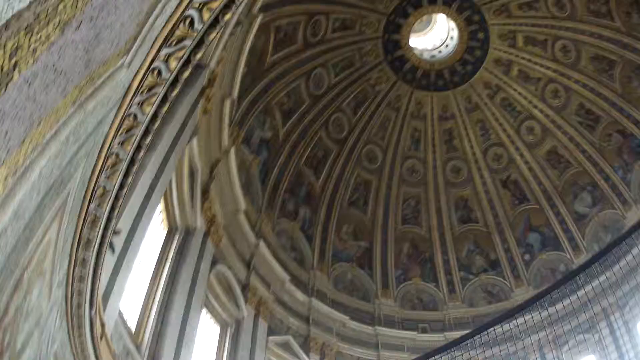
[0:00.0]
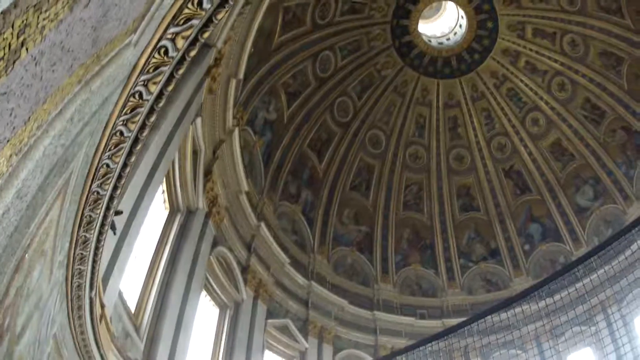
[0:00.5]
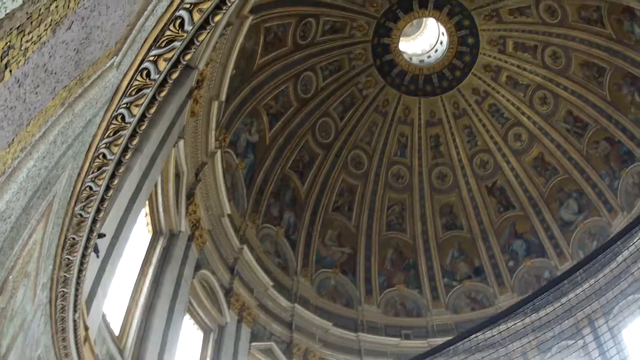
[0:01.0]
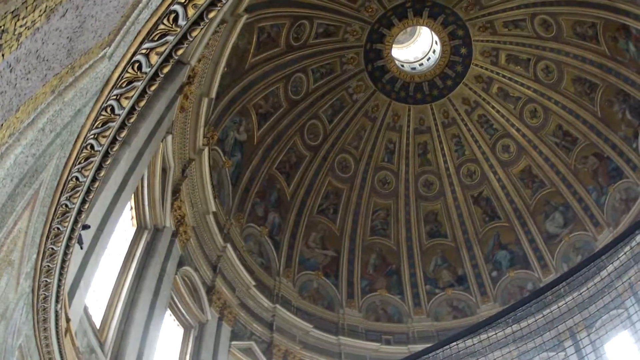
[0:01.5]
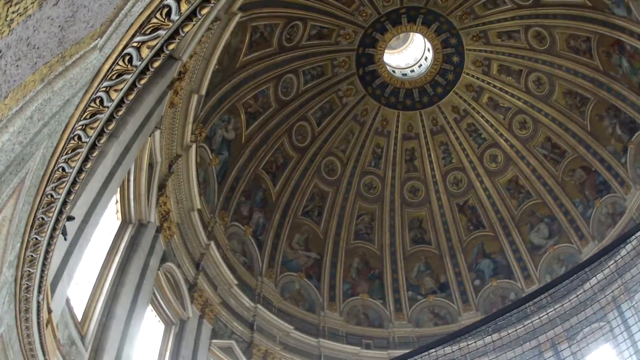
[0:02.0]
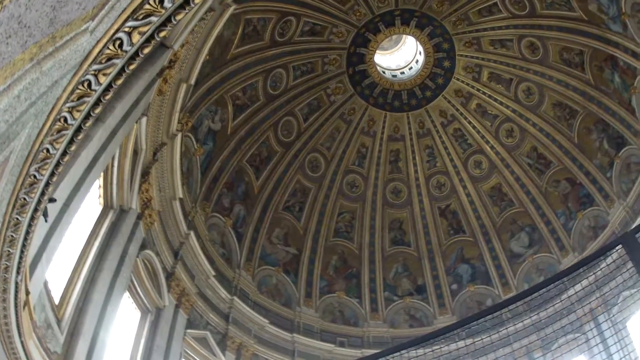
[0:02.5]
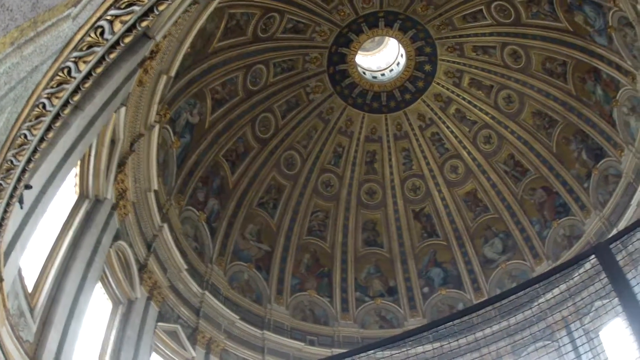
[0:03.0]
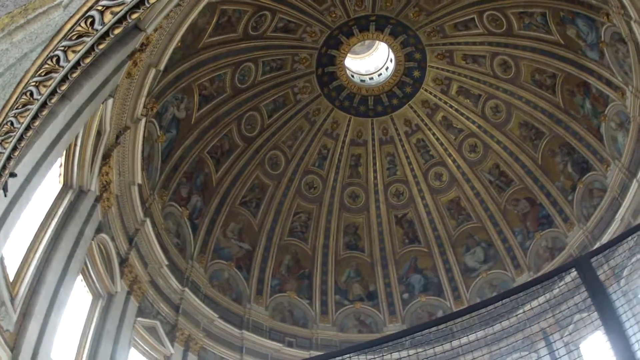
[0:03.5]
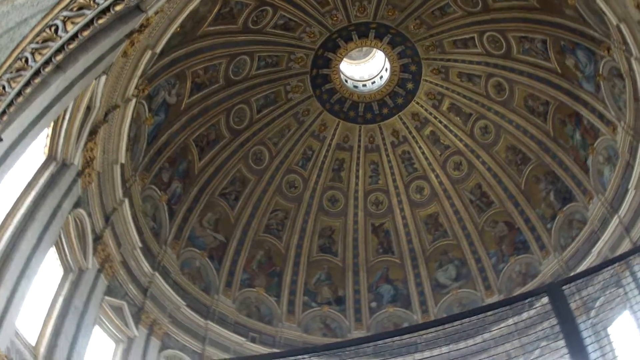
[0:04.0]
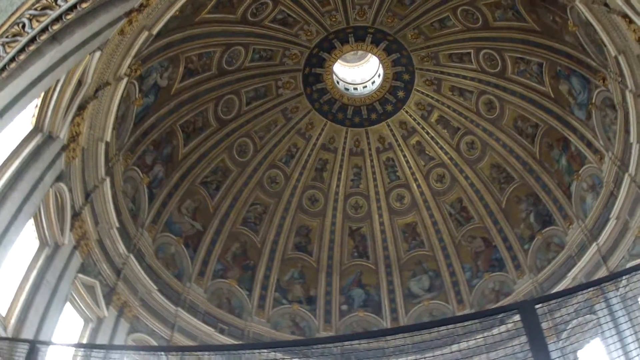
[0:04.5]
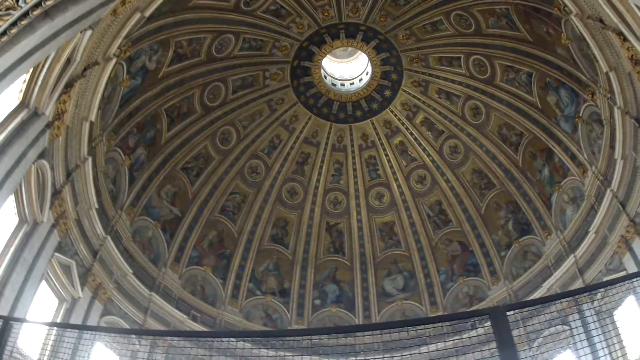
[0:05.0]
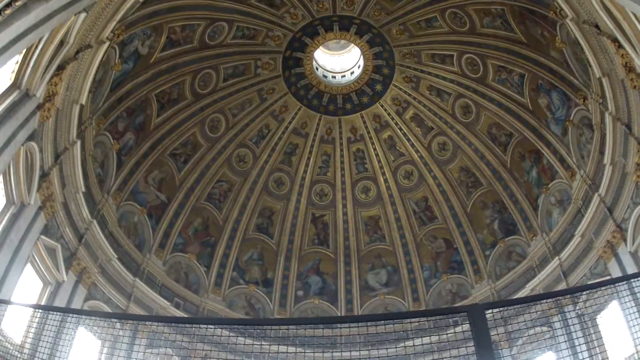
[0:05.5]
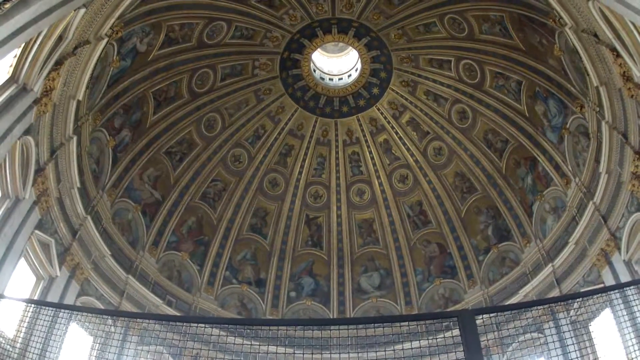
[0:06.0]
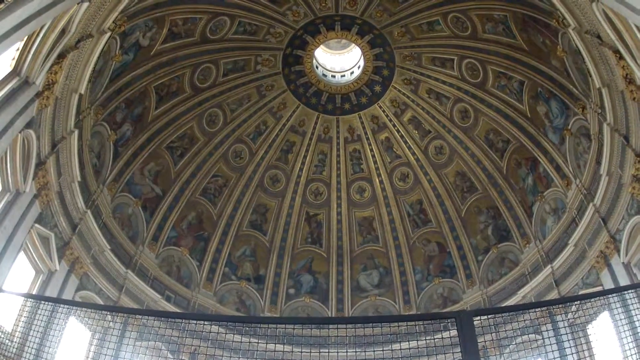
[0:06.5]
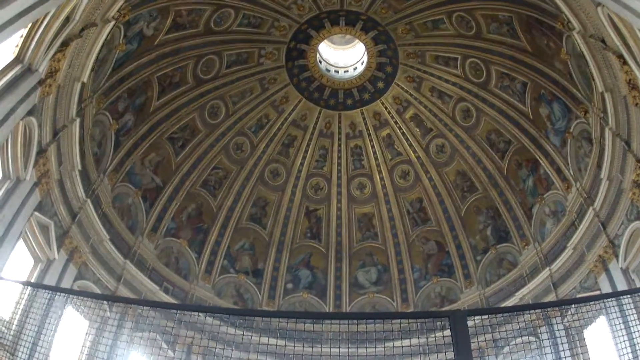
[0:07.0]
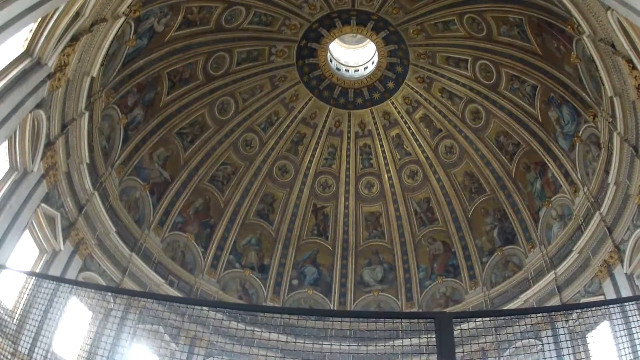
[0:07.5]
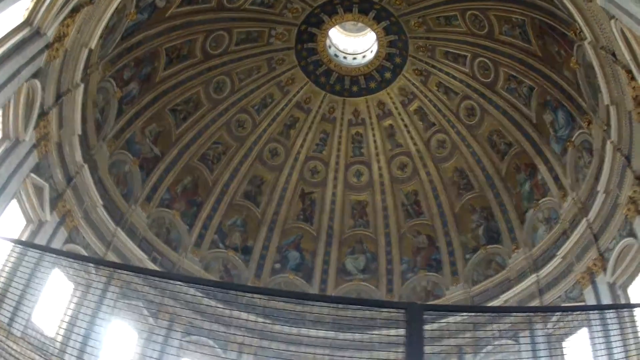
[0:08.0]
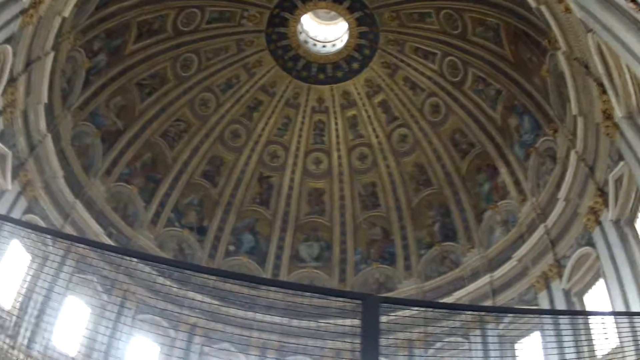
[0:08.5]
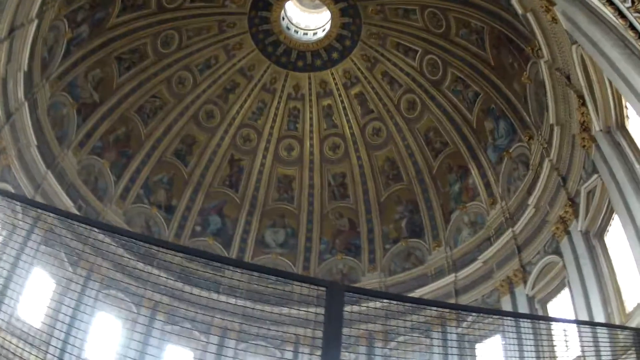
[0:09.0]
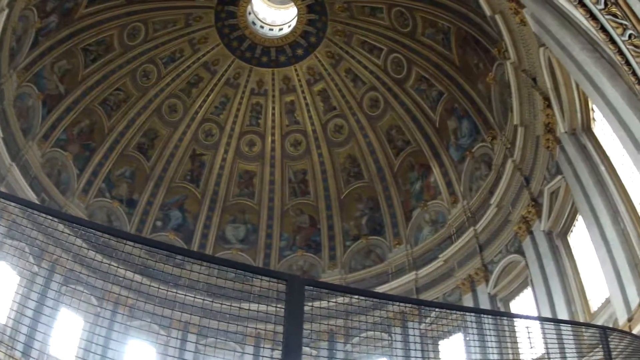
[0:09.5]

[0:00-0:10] A large building has a very high dome ceiling painted in what looks like a very classic style, possibly centuries old, with a religious-type look reminiscent of old paintings seen in churches or other places of worship. The building could possibly be a large chapel or cathedral. The walls are white, and the paintings are colorful but mostly beige. The figures appear to be religious figures, possibly including Jesus or other figures around the dome. There may be crosses, though it is hard to tell since the artwork is not shown very close up. A fence borders the area.